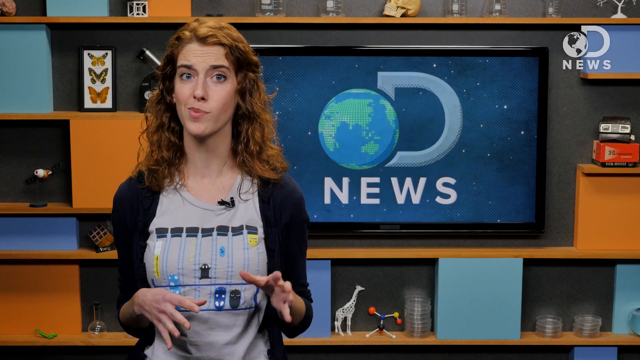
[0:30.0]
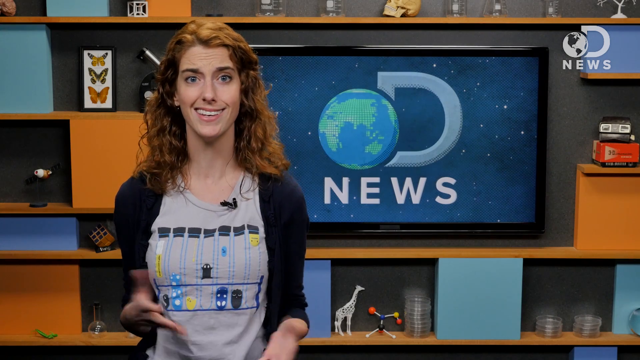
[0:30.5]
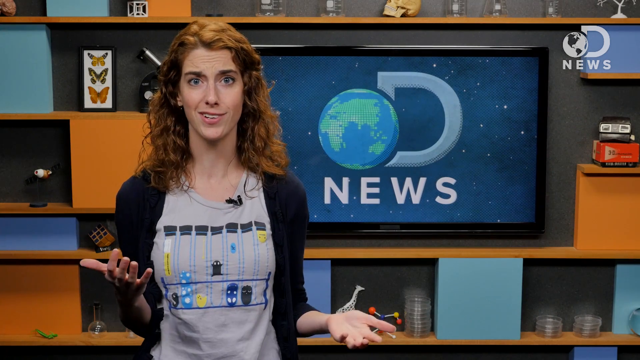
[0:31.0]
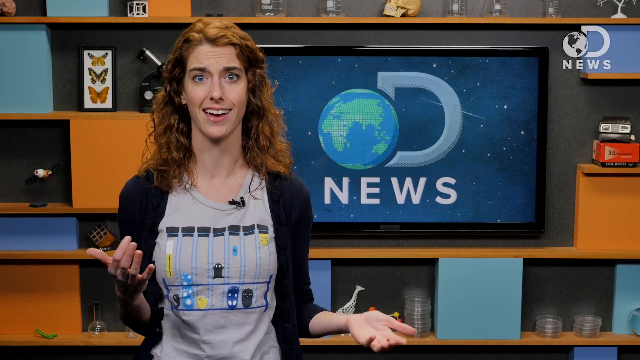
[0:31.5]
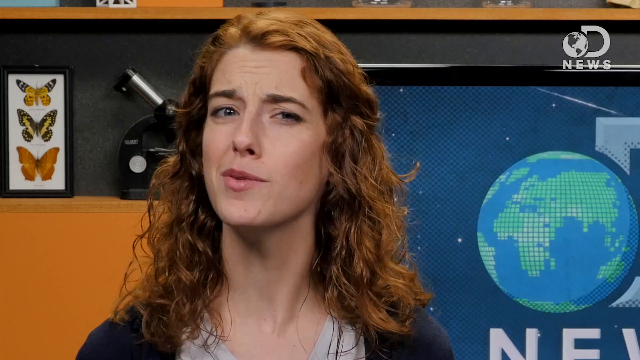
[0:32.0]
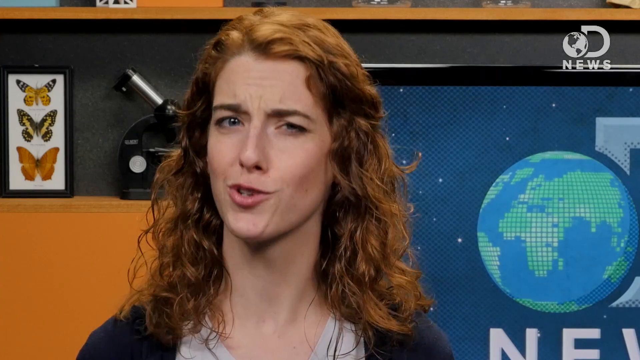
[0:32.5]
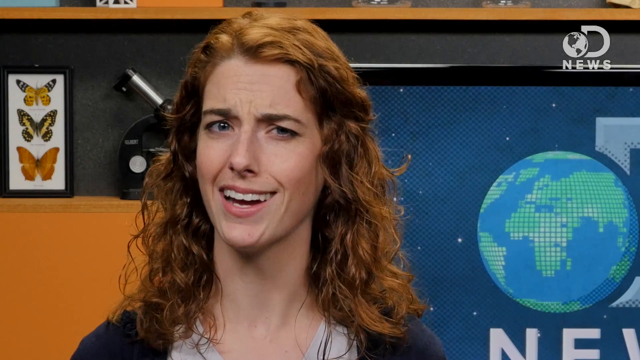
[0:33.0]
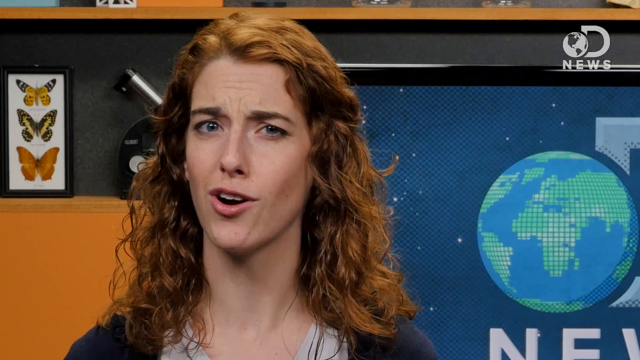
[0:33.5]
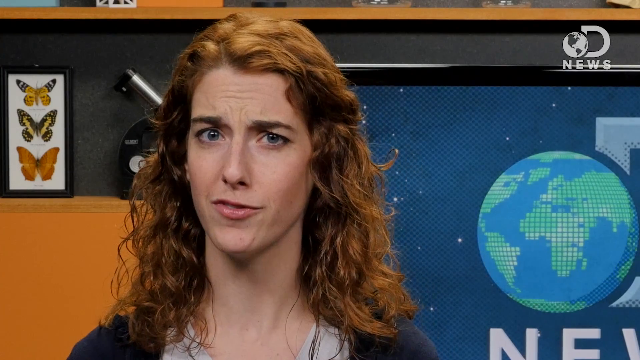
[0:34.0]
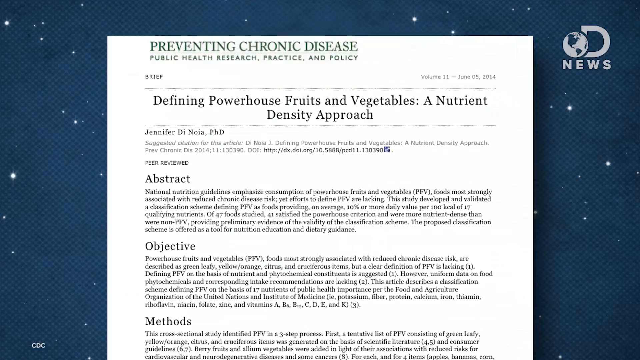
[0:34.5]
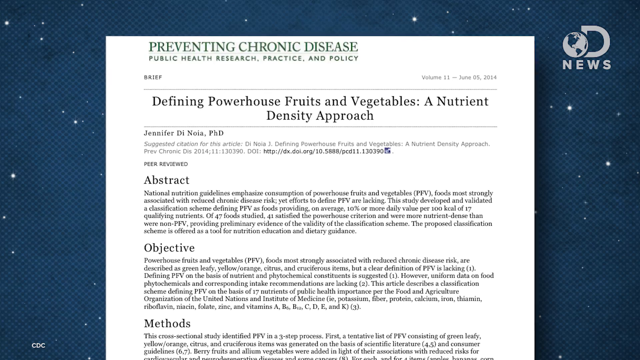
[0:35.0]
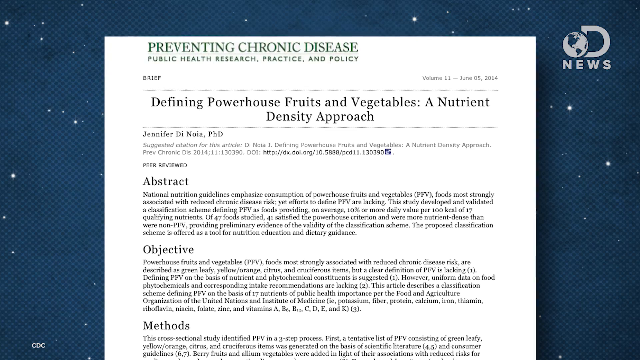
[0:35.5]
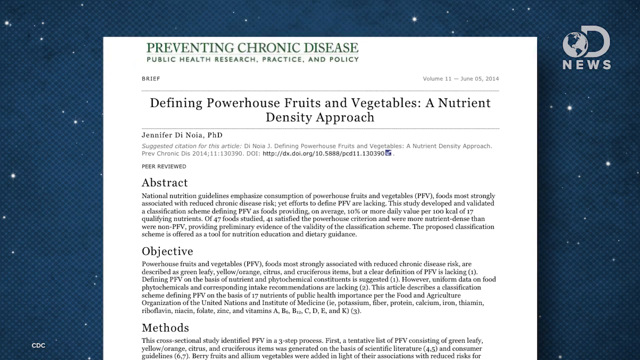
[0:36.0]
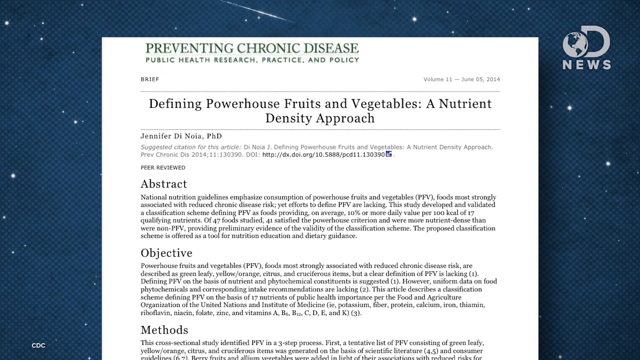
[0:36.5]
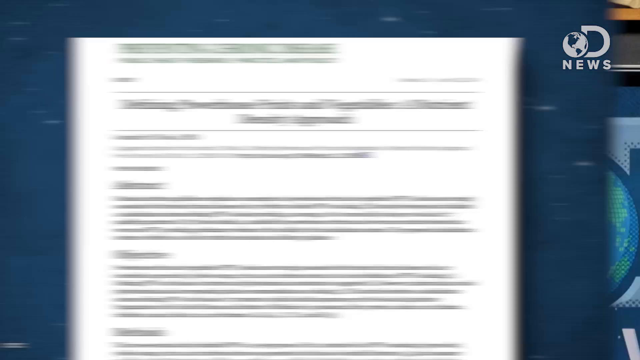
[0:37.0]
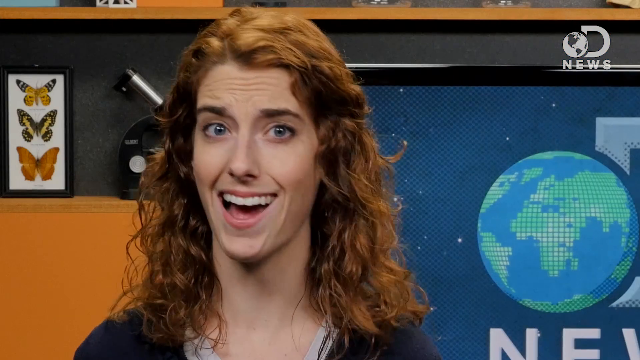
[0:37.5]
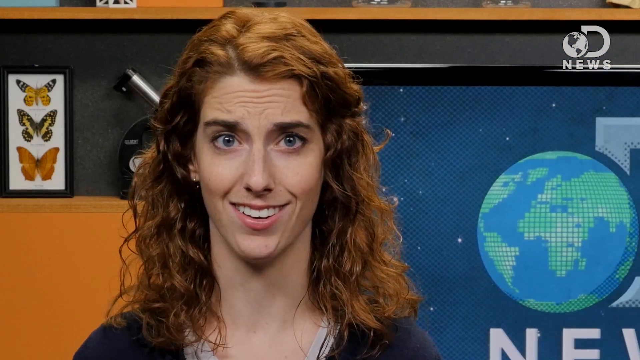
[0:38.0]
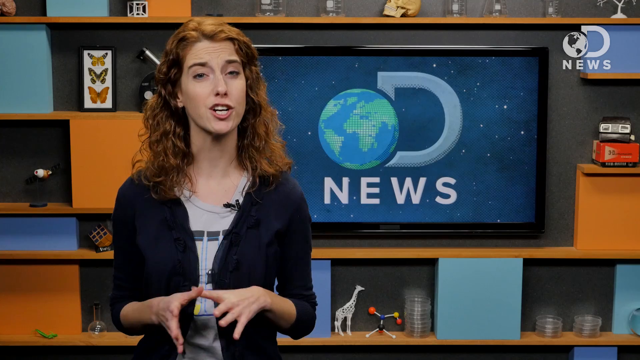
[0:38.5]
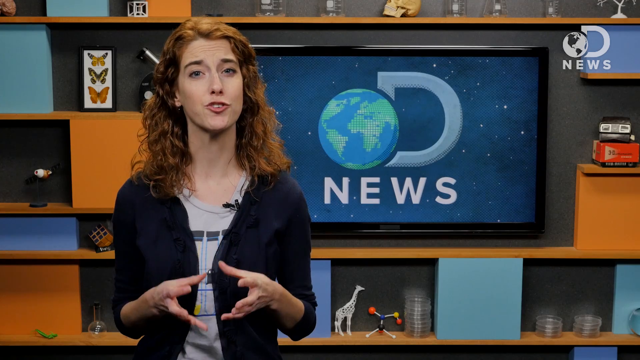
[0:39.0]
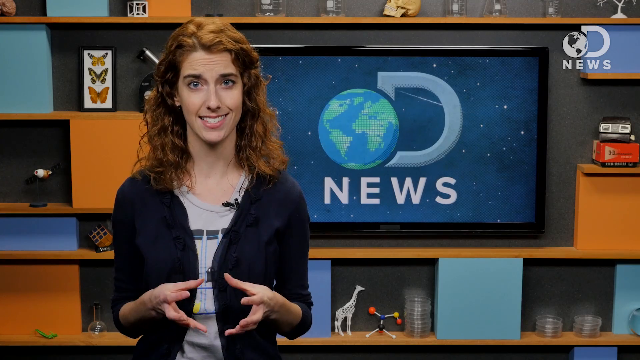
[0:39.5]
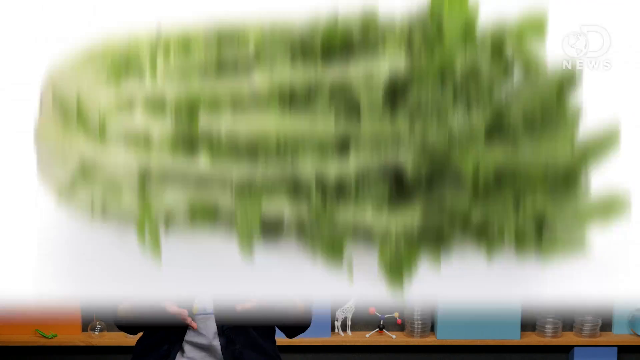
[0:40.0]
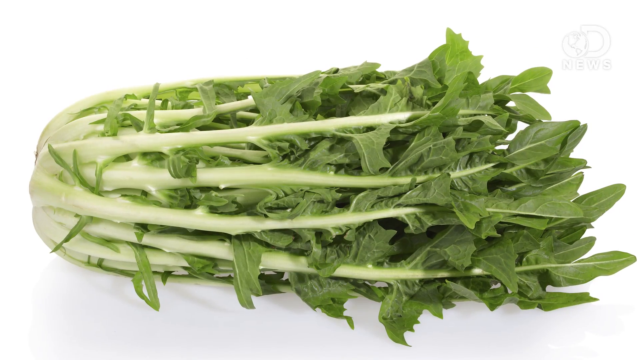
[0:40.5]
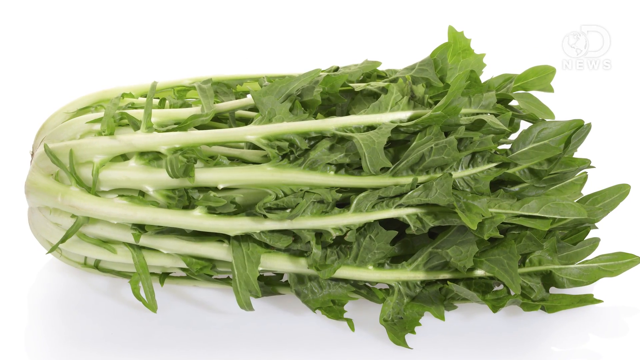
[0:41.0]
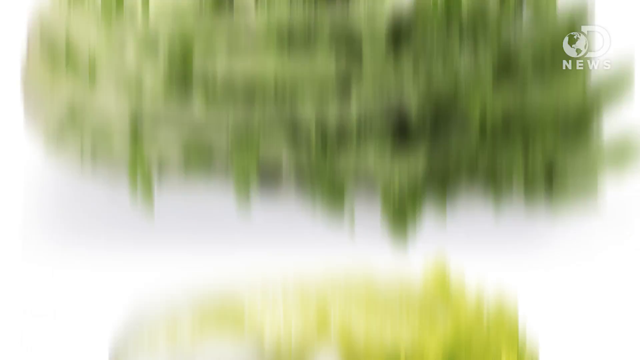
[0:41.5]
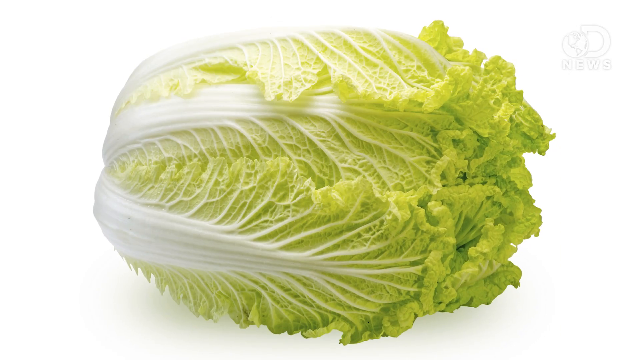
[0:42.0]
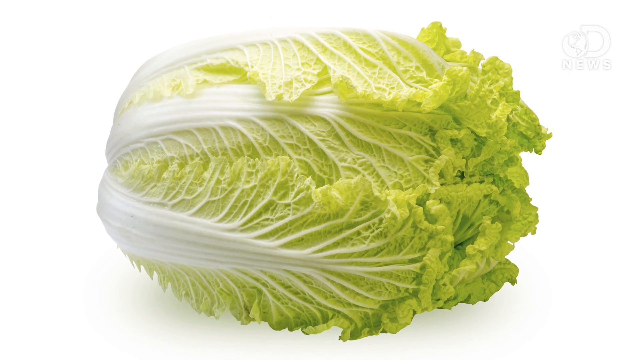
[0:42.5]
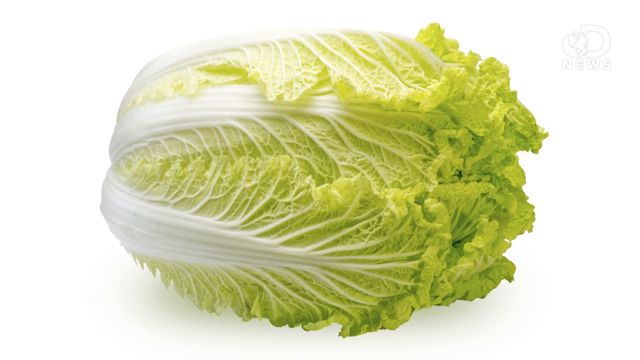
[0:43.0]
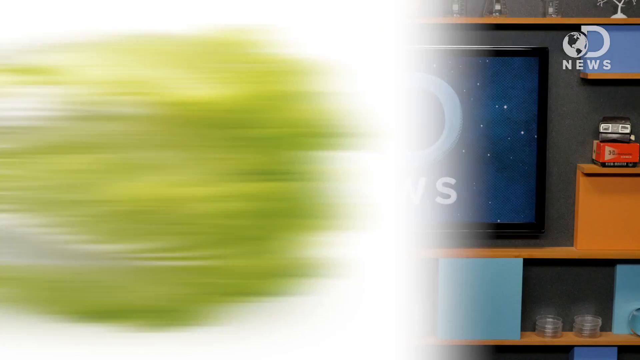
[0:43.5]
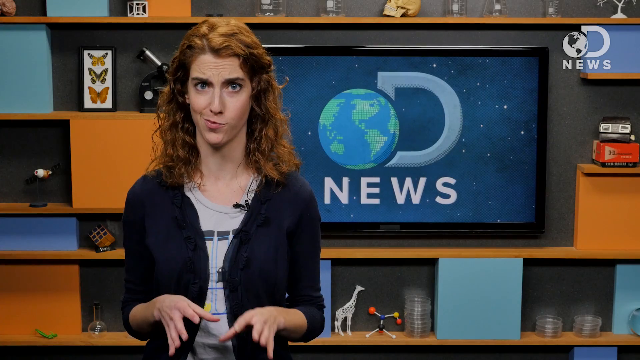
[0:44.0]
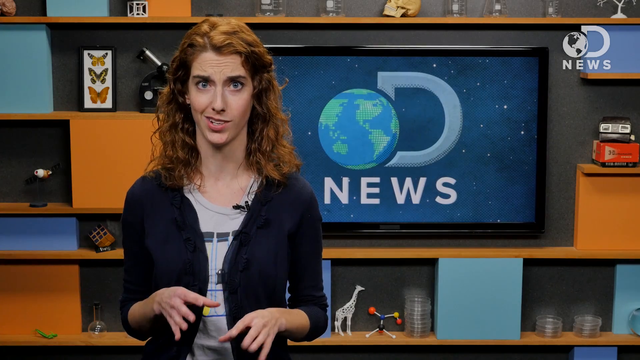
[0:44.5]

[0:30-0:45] The same woman, with white skin and blue eyes, wears a black cardigan over a gray t-shirt with graphics that are difficult to make out. She speaks directly into the camera, very animated with her hands, and appears to be talking about vegetables. Different images of vegetables flash on the screen, including lettuce and what looks like cabbage. A news article is then shown on the screen with the title "Defining Powerhouse Fruits and Vegetables, a Nutrient Density Approach."